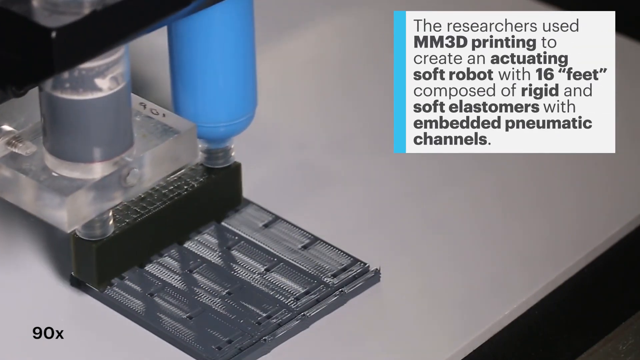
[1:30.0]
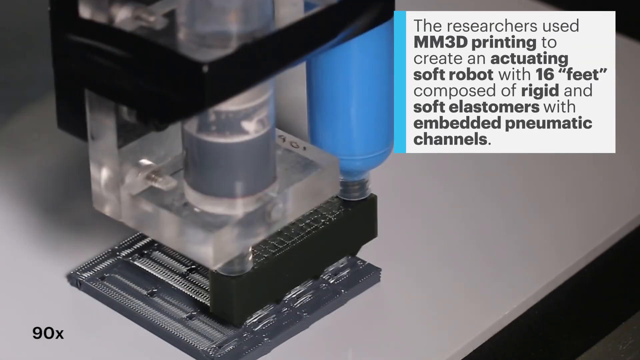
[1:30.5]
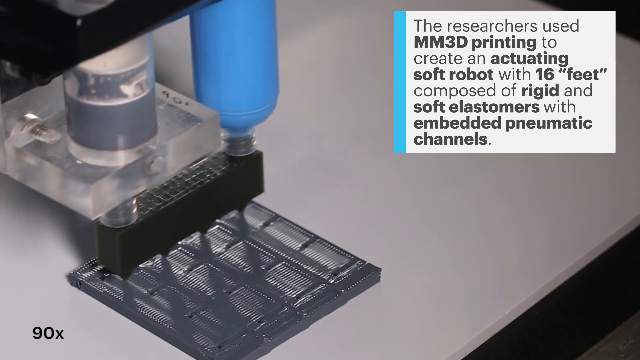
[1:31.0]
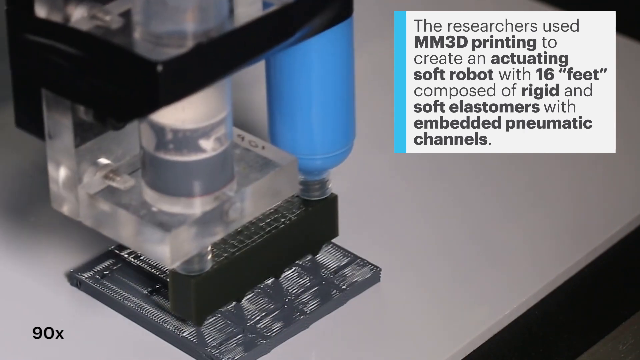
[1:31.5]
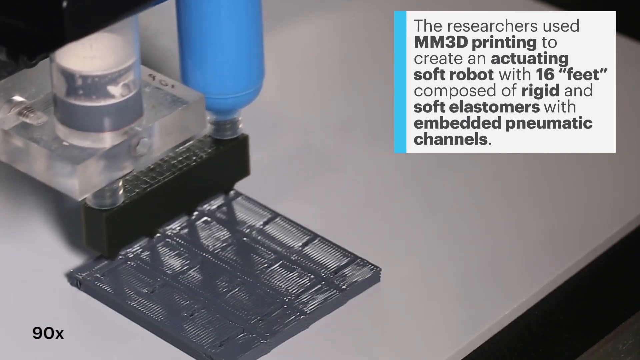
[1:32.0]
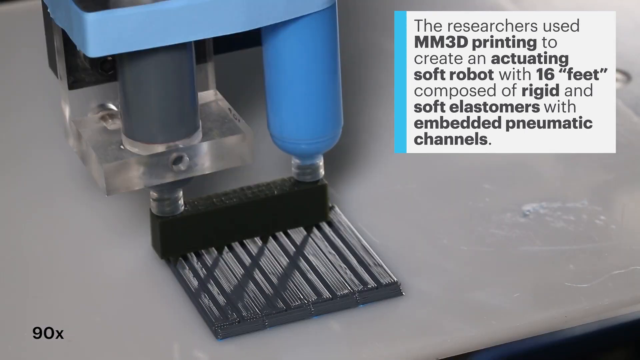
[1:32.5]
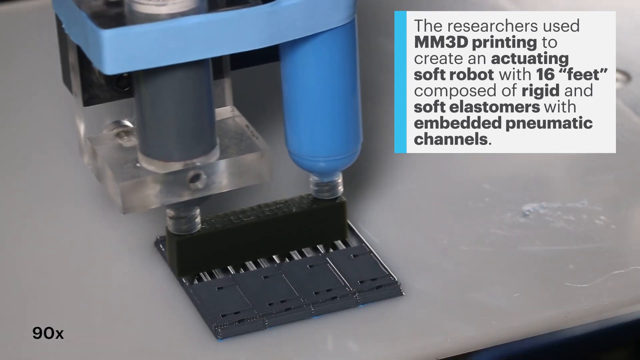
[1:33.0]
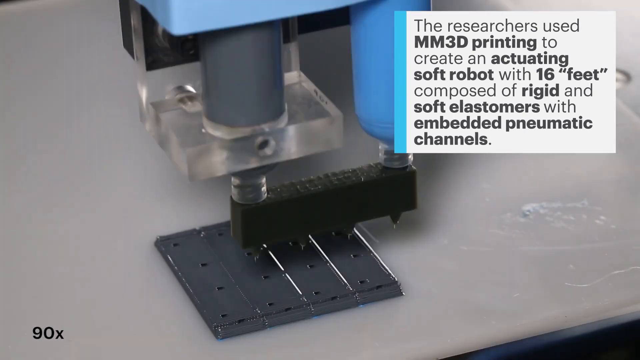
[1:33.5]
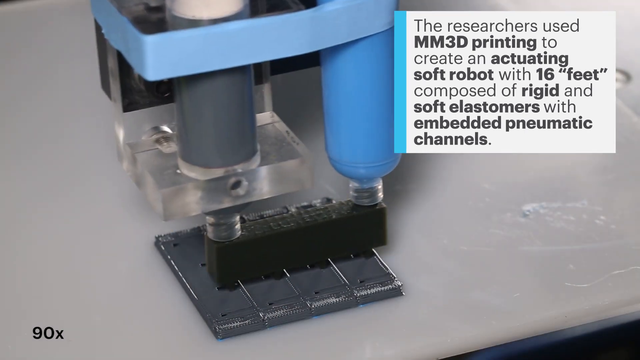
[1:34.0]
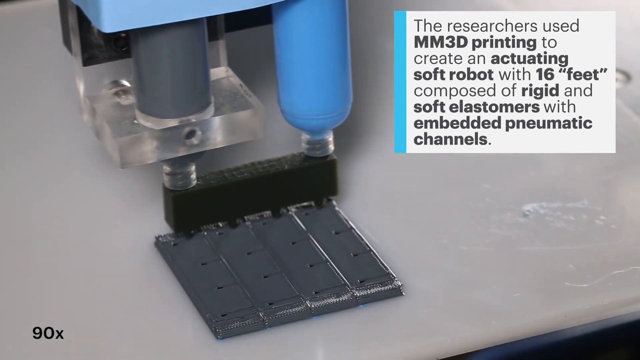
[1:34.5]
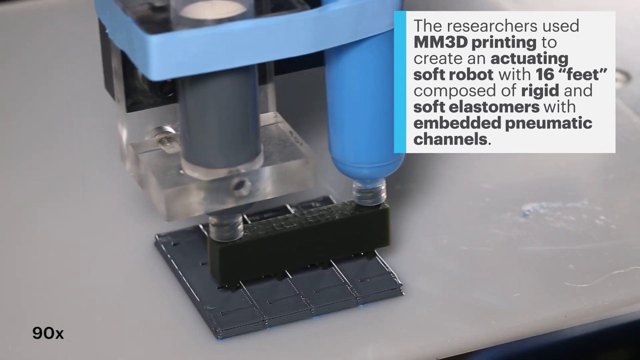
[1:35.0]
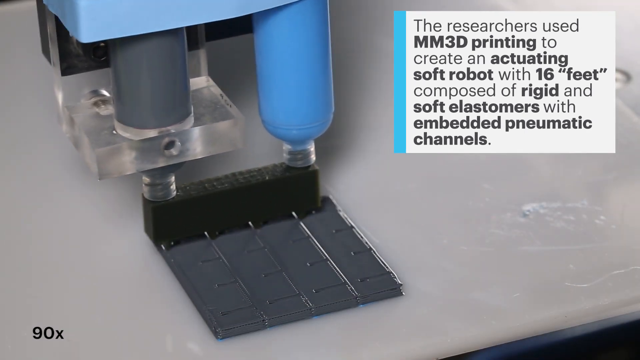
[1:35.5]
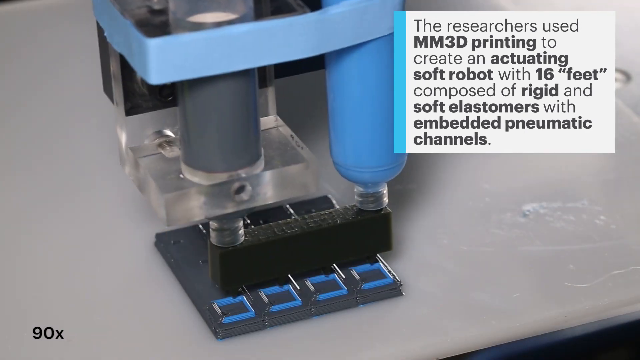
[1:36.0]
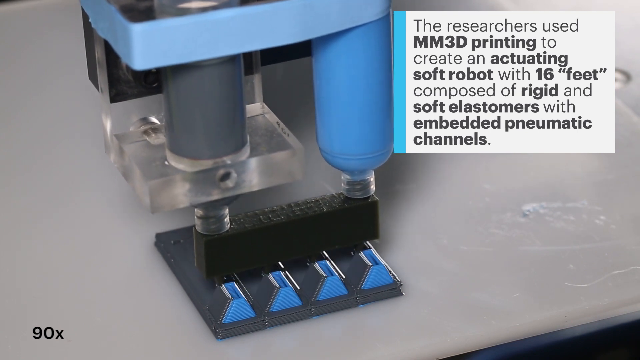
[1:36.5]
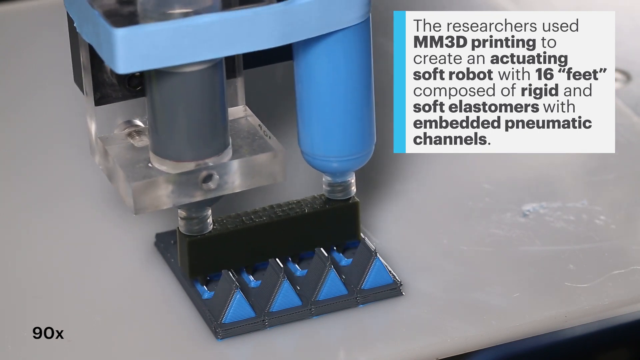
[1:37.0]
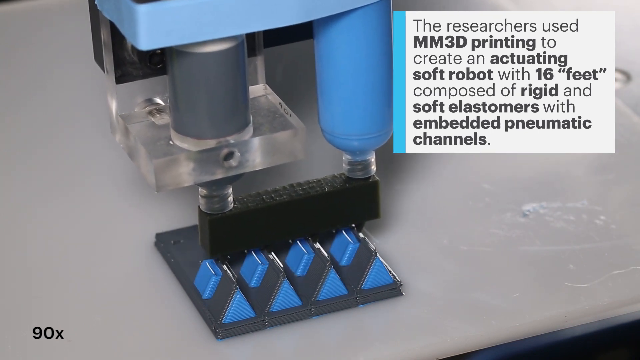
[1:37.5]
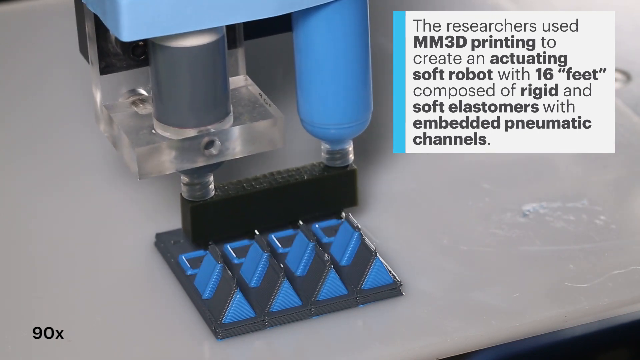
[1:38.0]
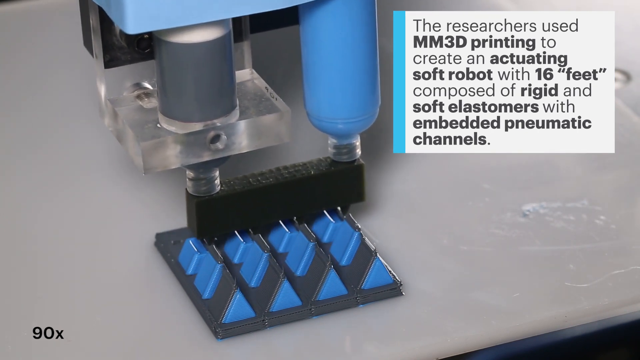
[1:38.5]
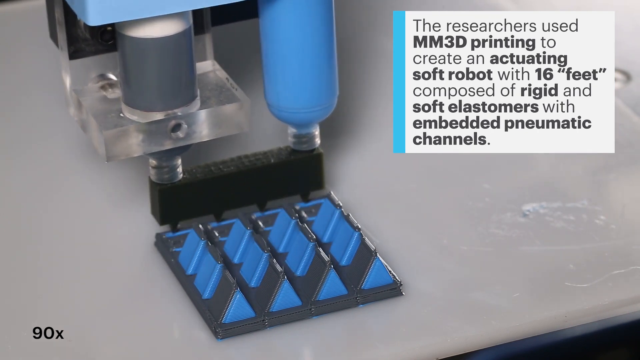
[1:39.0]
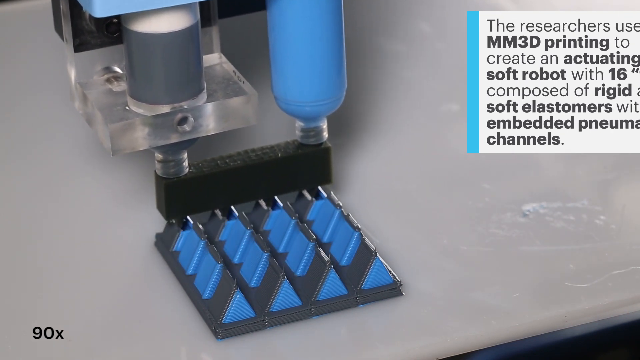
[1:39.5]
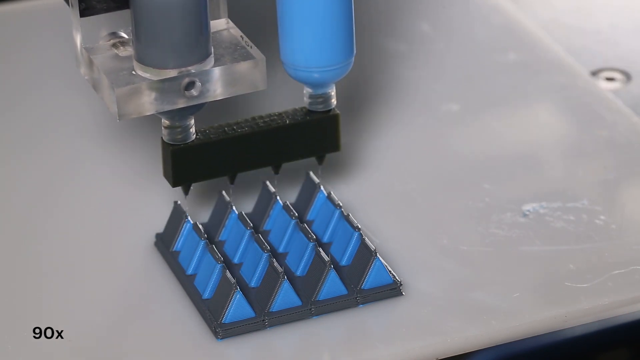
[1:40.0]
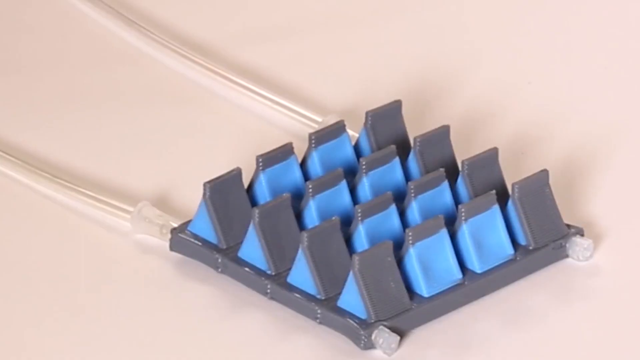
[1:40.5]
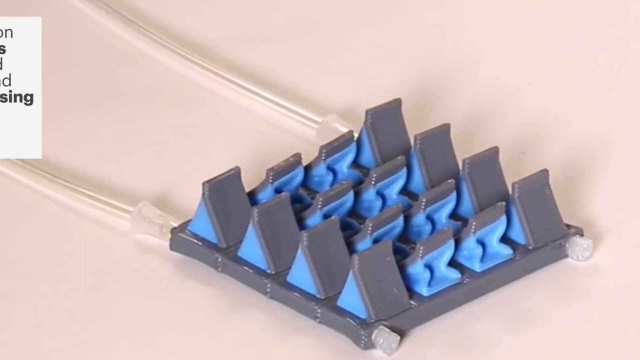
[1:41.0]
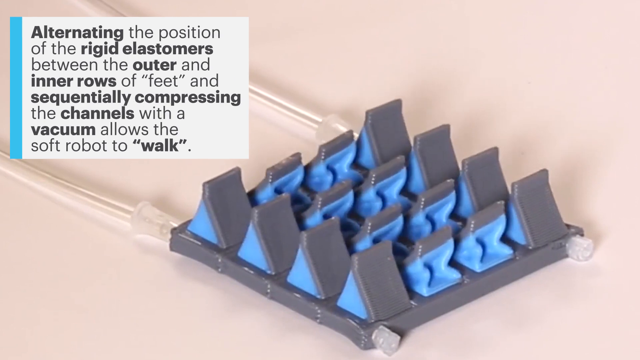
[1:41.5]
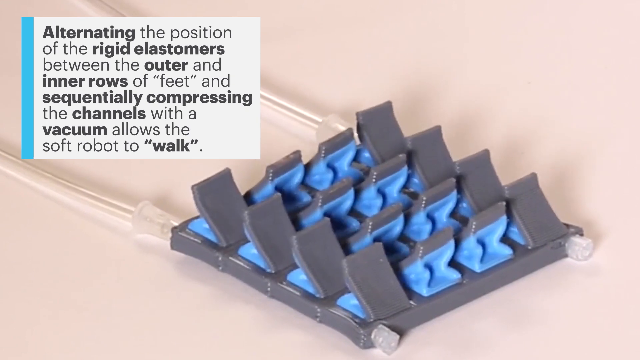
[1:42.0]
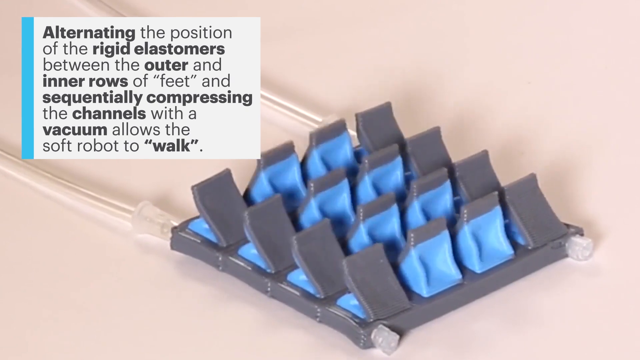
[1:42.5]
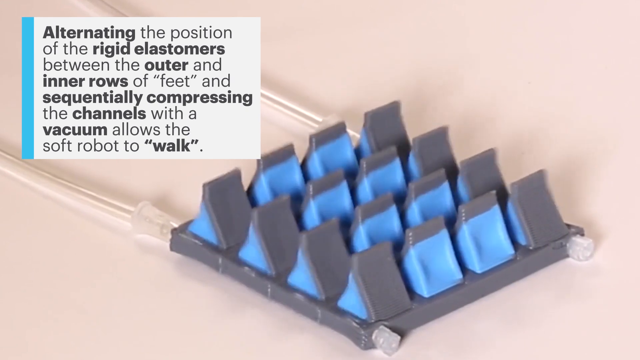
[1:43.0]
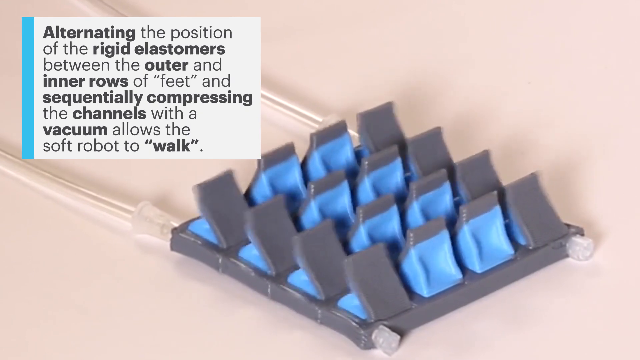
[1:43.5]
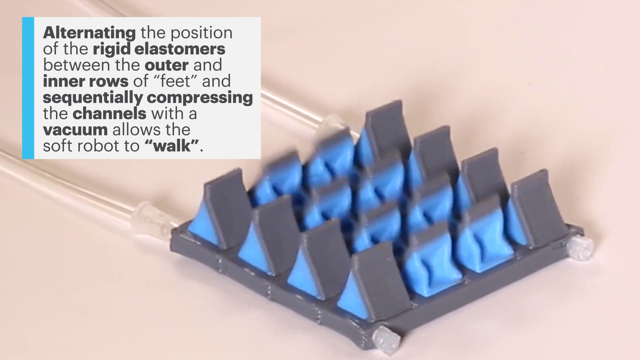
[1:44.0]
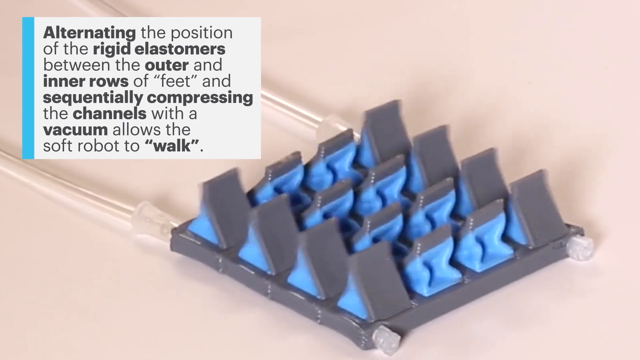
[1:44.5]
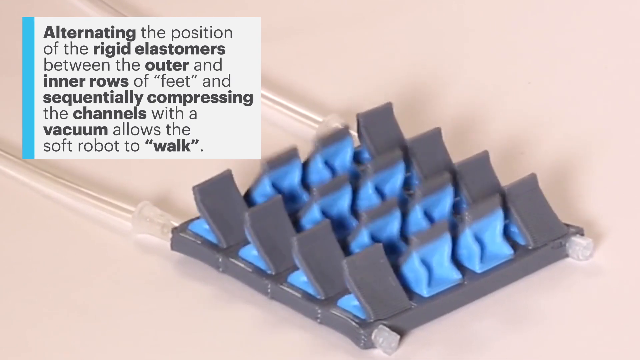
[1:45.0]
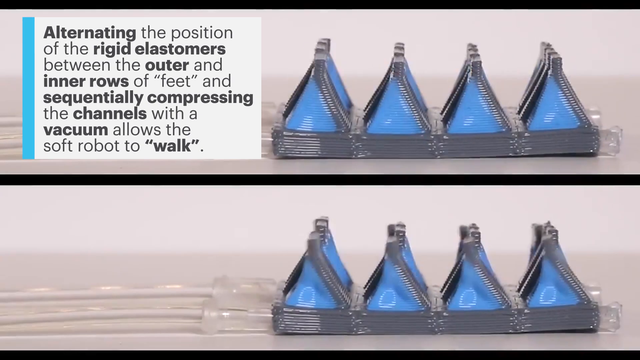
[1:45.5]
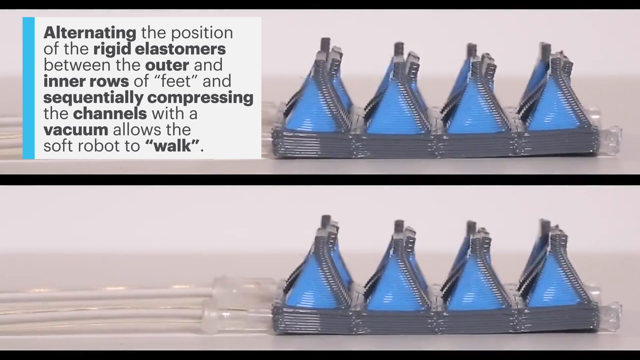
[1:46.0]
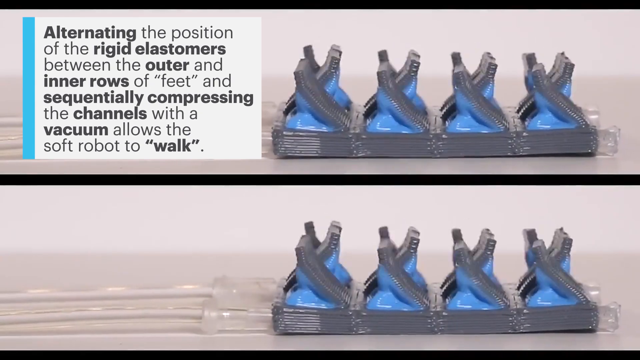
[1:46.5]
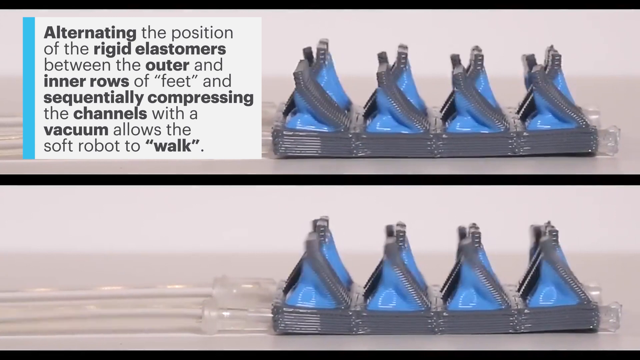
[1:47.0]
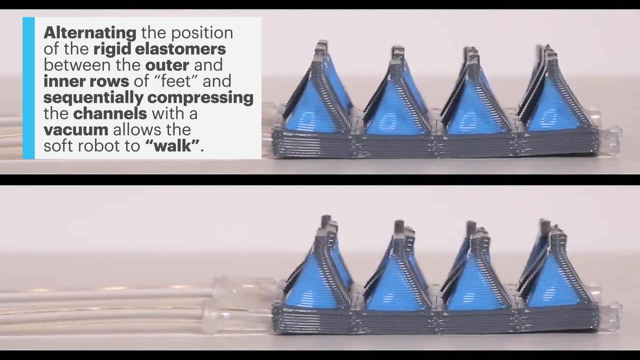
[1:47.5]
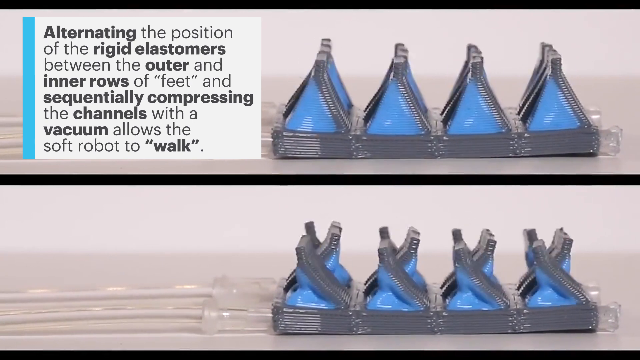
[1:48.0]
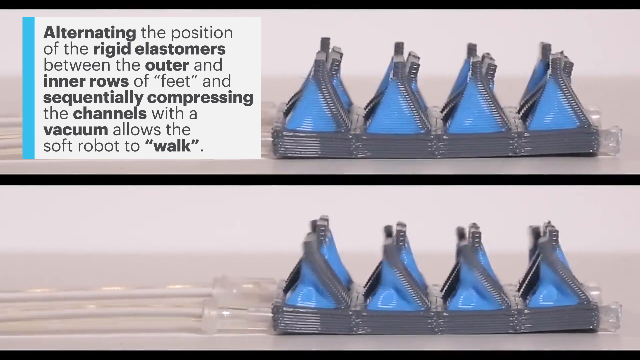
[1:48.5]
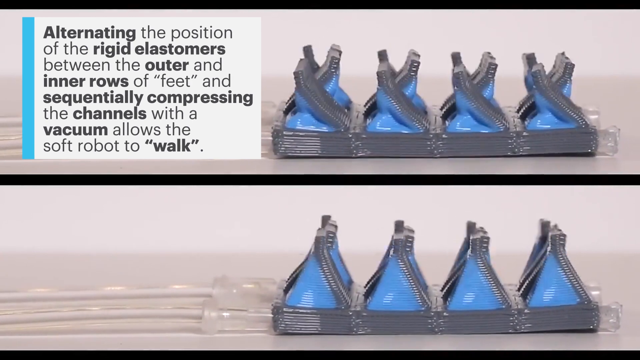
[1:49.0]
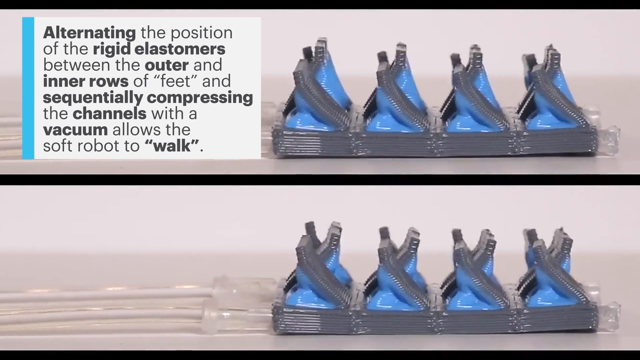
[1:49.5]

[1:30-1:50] Sped-up footage, at 90 times speed, shows the printer building up a component layer after layer; the material can be a mixture of metal and plastic. A base plate has 16 pyramid-shaped ridges on it in blue and grey. Text states that alternating the position of the rigid elastomers between the outer and inner rows of feet and sequentially compressing the channels with a vacuum allows the soft robot to walk. The different bits of plastic flex at different times, gaining momentum in one direction, and the piece moves forwards. The component is flipped over so that the pyramid-shaped soft features are on the floor, and as they flex in sequence it starts moving.